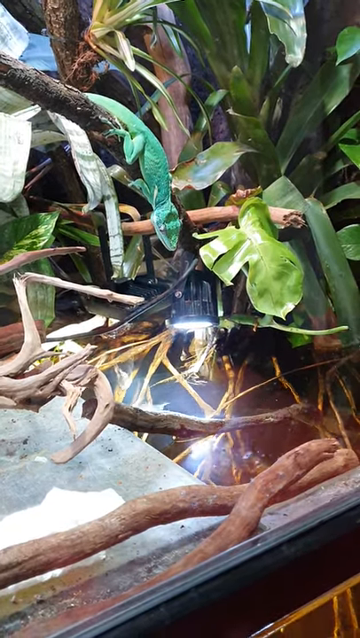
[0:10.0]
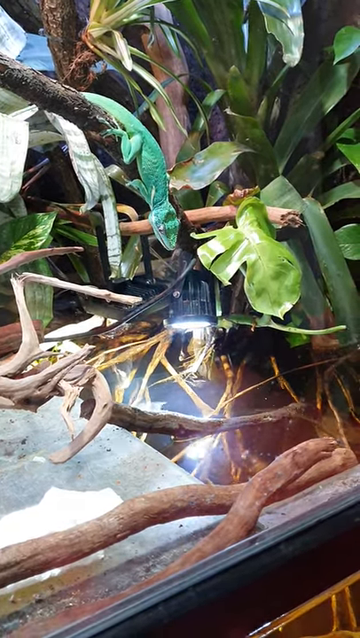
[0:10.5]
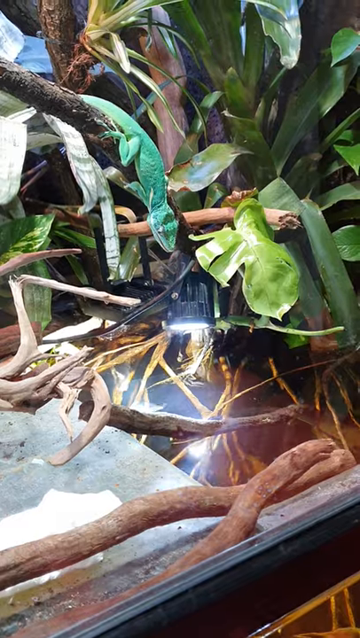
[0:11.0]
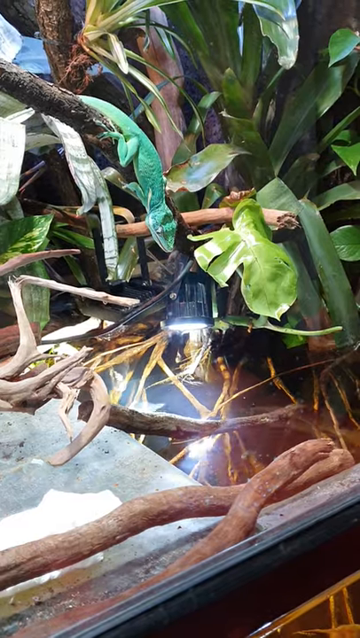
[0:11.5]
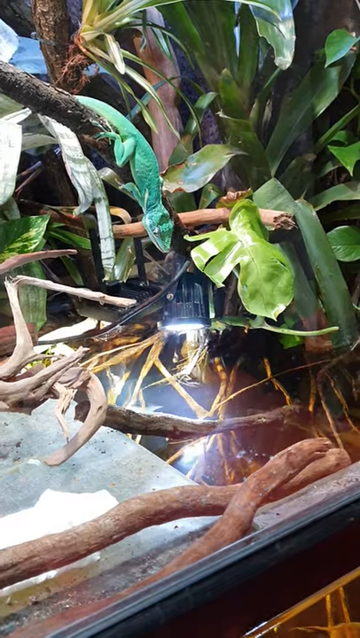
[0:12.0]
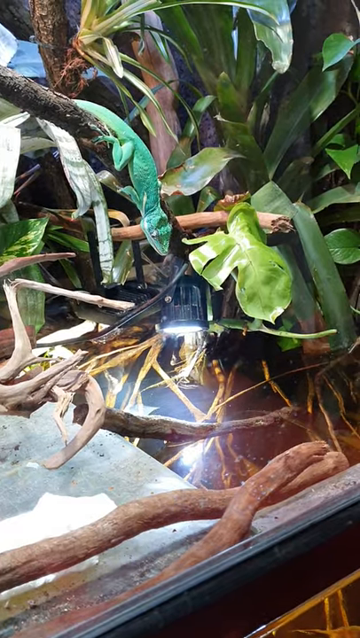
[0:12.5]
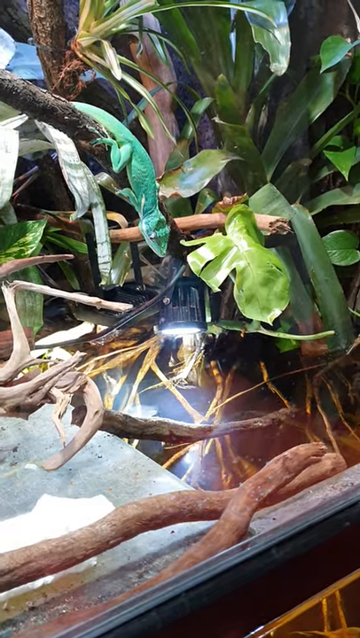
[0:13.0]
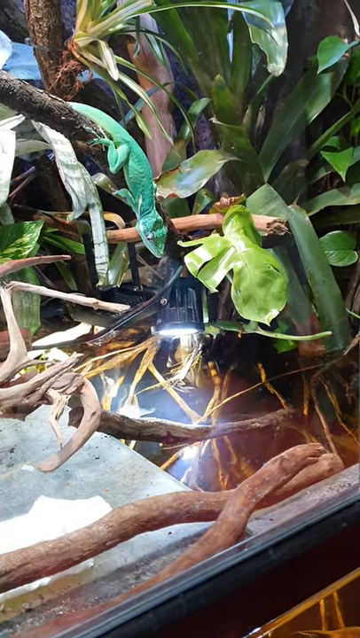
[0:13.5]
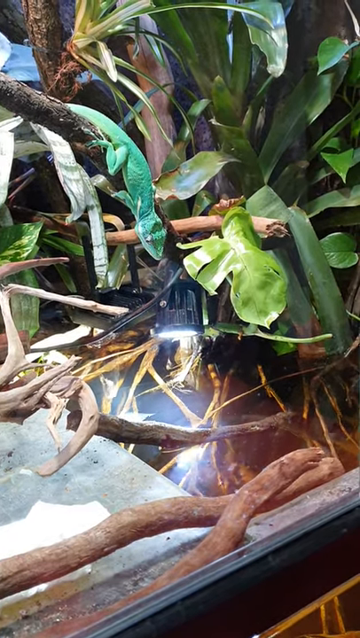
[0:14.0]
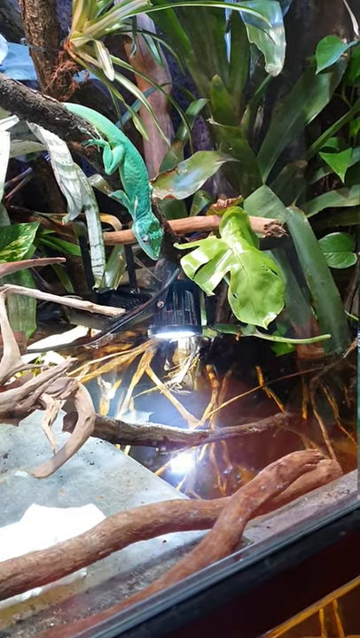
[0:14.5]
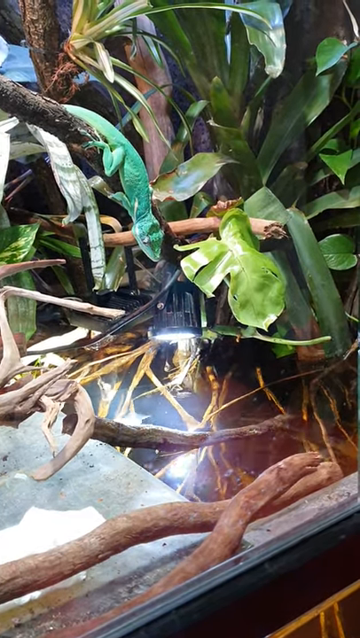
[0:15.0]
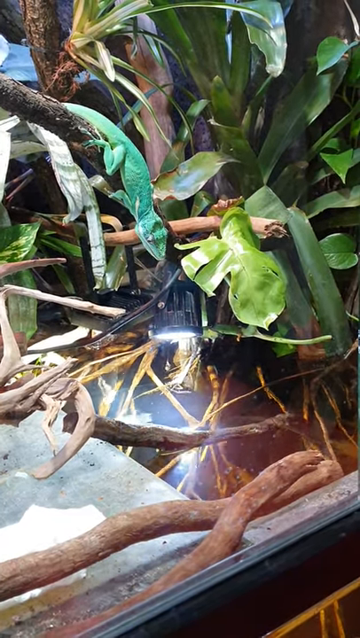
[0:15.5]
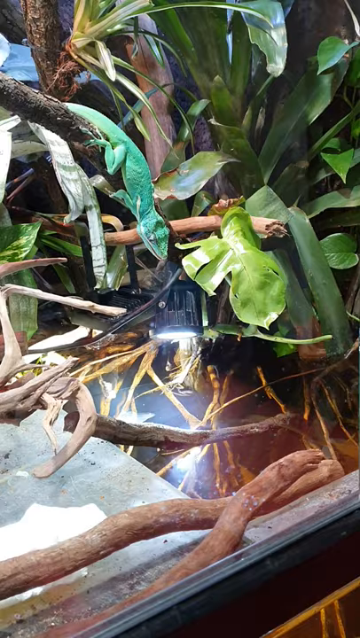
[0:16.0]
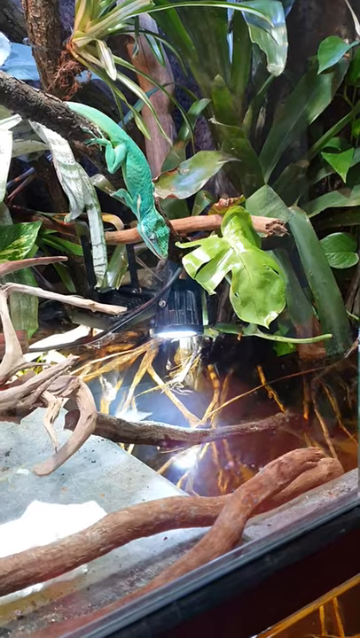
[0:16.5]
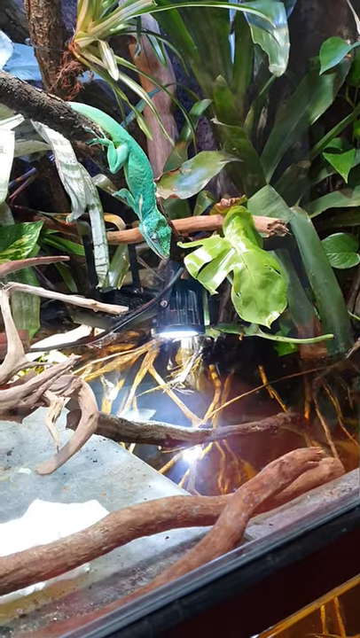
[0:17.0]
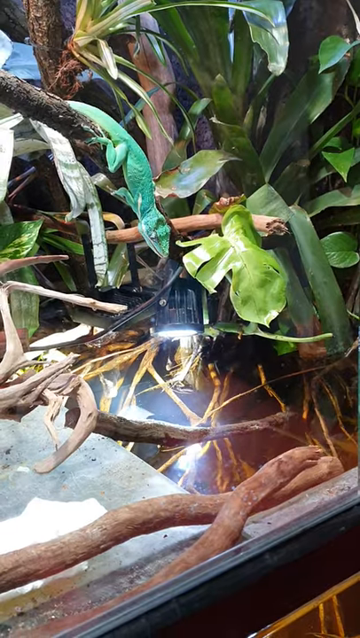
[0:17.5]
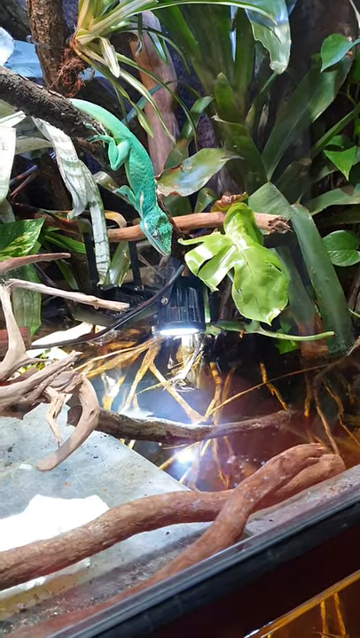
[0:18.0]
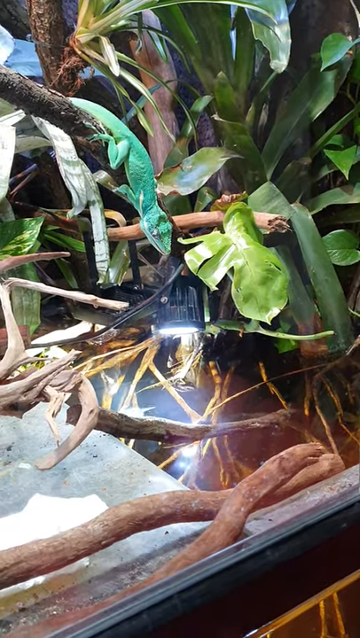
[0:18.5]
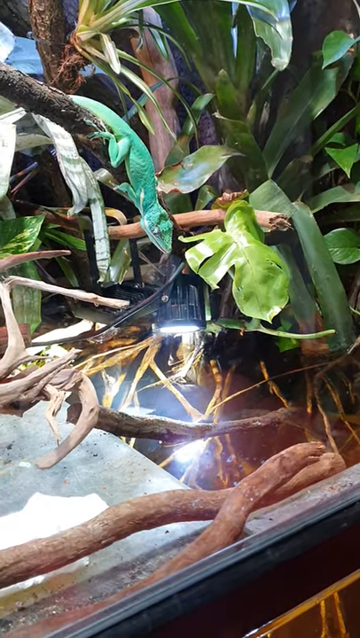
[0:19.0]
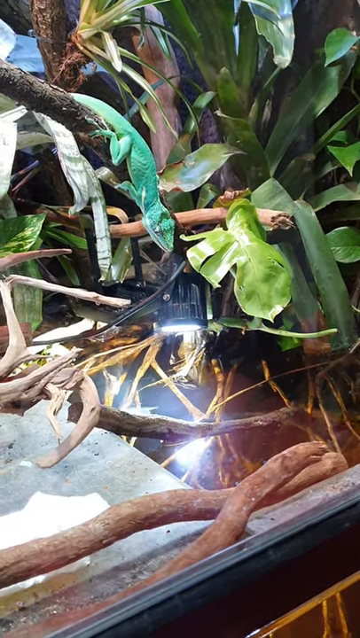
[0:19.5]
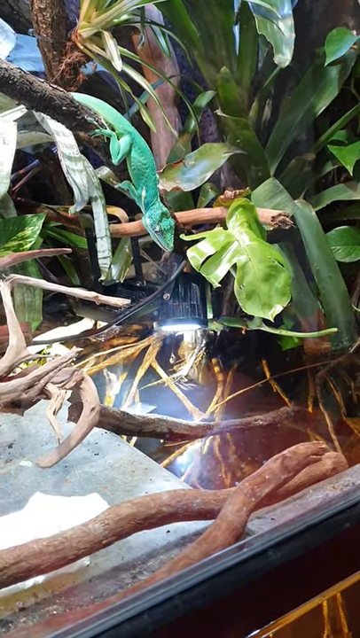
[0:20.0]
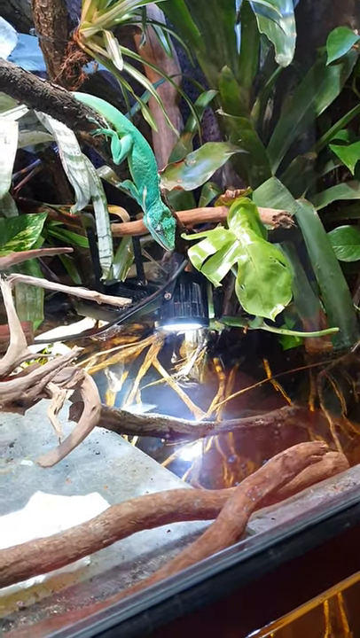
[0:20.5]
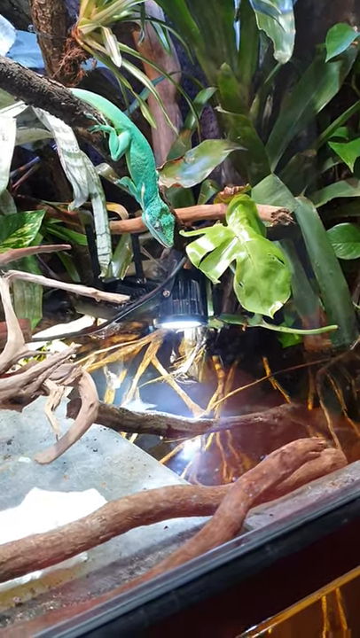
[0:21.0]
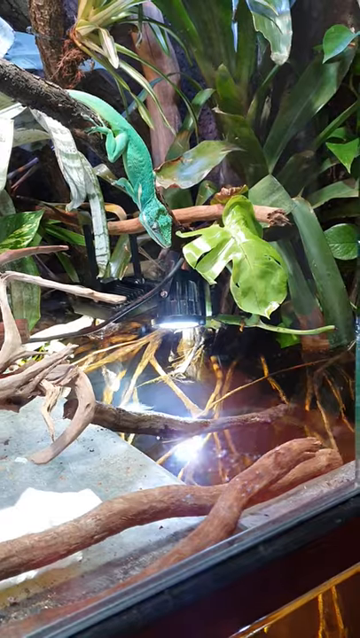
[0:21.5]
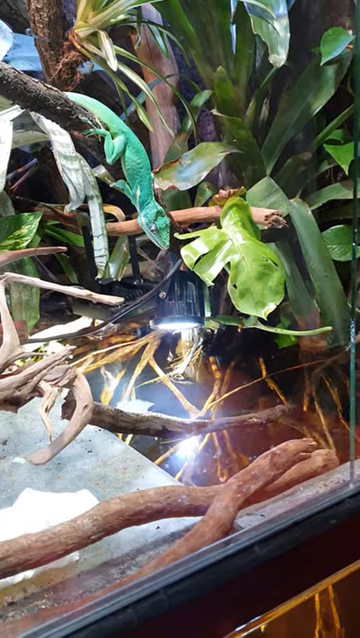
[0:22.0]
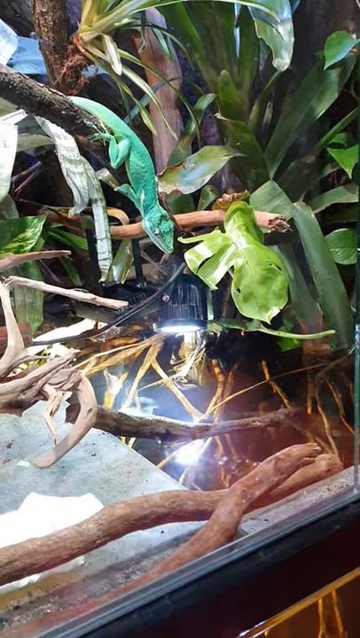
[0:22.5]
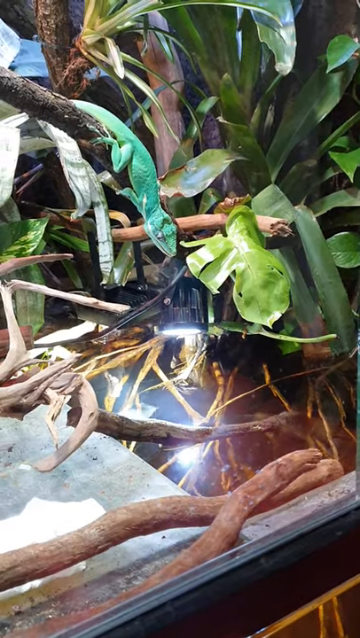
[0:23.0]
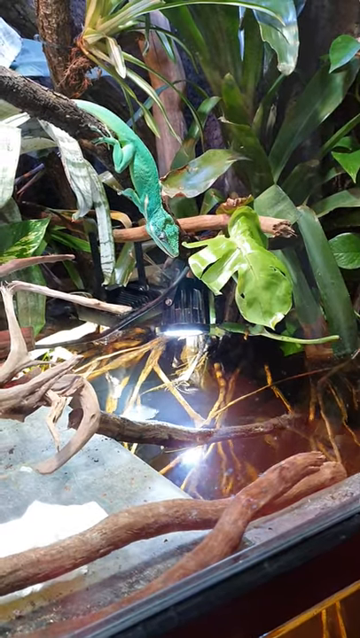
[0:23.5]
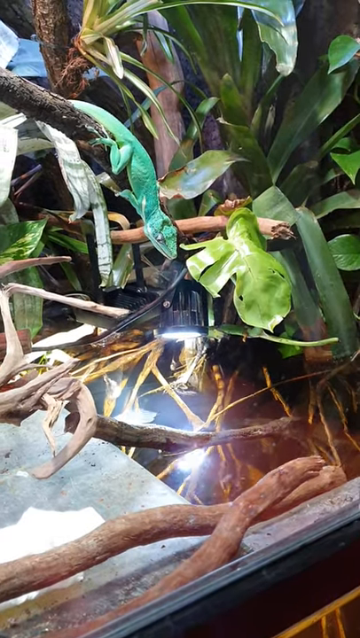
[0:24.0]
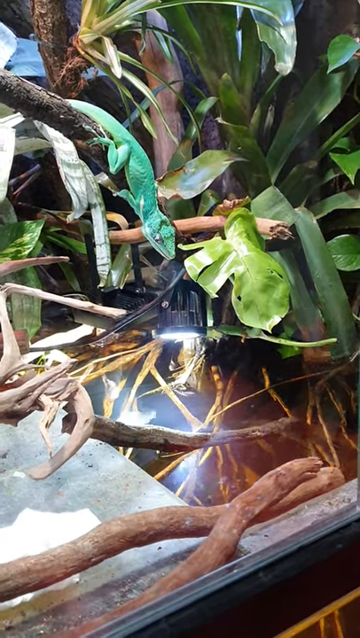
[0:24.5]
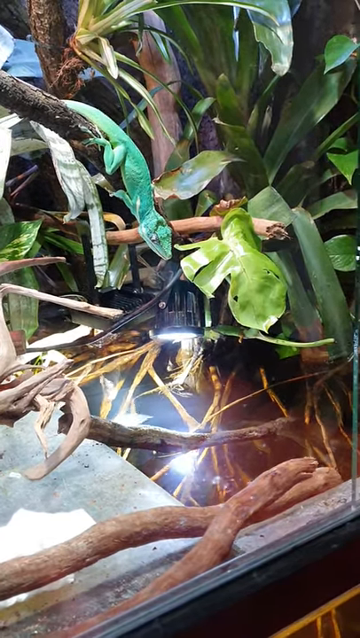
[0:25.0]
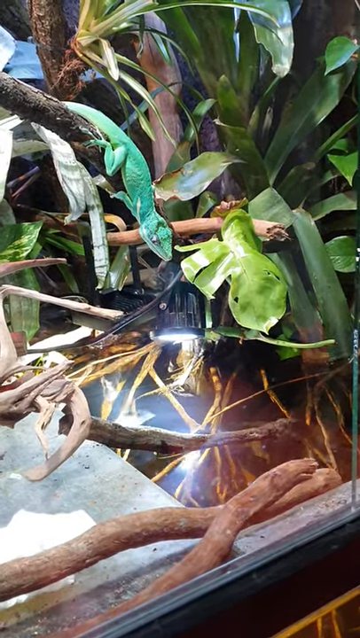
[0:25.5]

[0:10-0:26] The scene continues in the same location, with the lizard atop the same brown branch, facing downwards towards a pool of water, with little to no movement or change. The surrounding area is filled with greenery, green plants and branches, and within the pool of water below there appear to be lots of roots and branches. The water is a slightly murky brown colour, and a light just below the lizard's head shines down onto the water, creating a slight reflective glare. There are no other subjects; the lizard barely moves, just sitting atop the branch looking downwards.